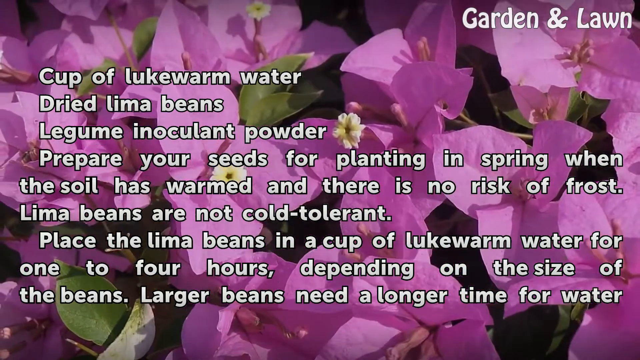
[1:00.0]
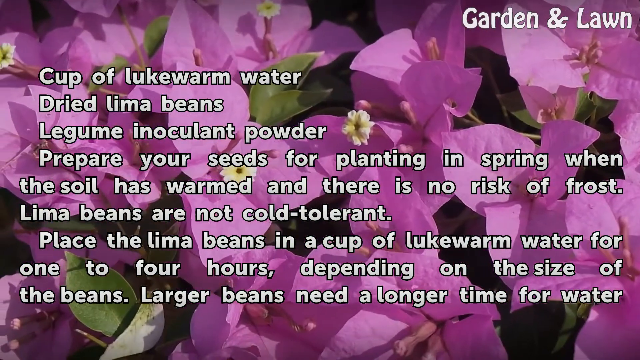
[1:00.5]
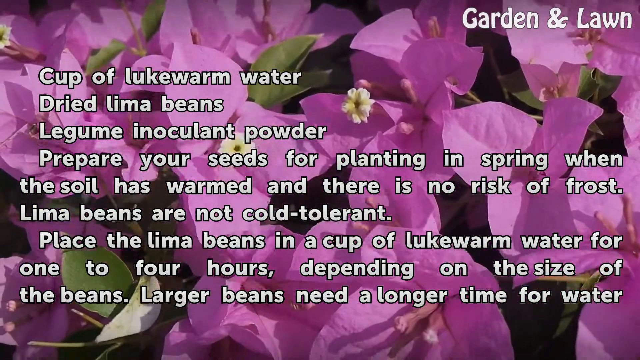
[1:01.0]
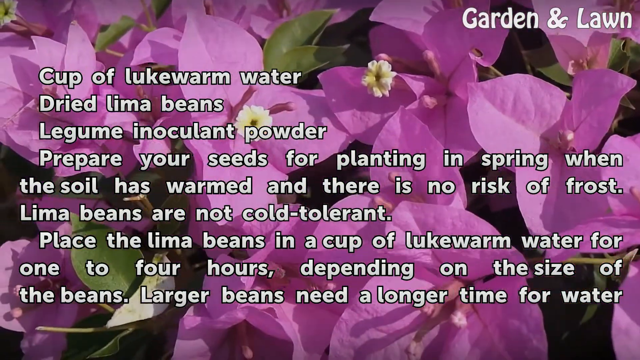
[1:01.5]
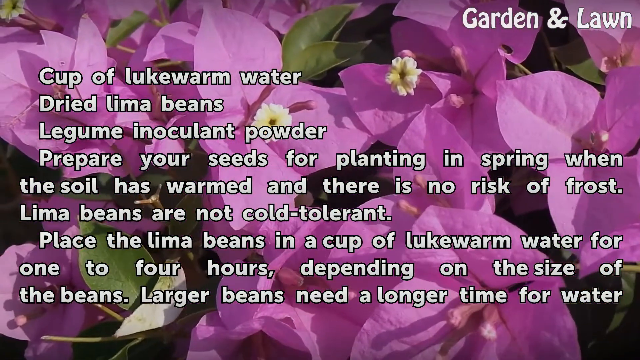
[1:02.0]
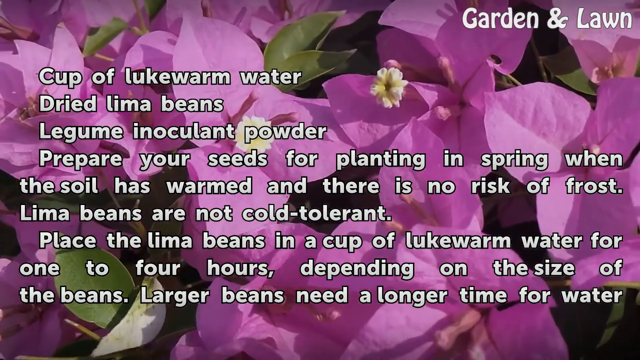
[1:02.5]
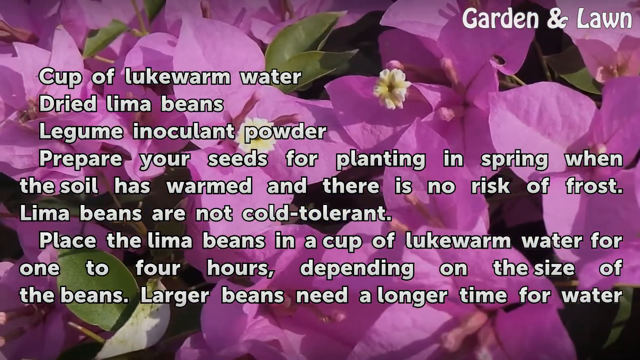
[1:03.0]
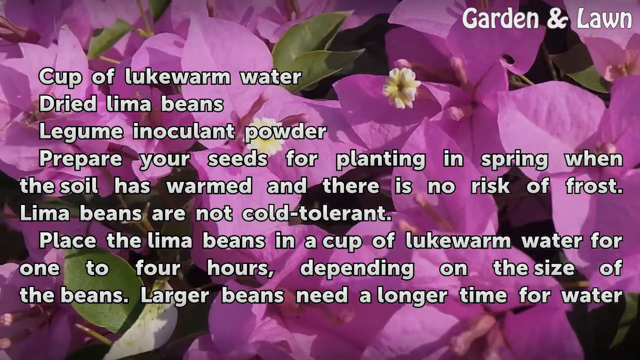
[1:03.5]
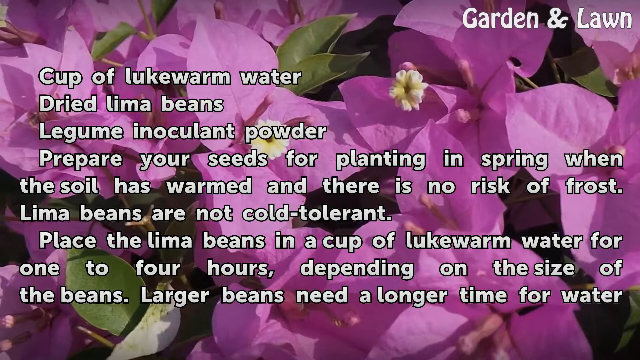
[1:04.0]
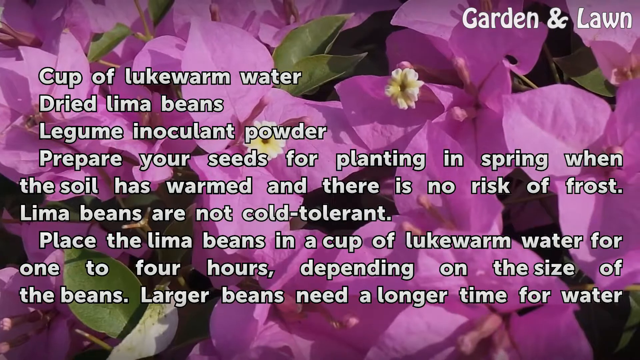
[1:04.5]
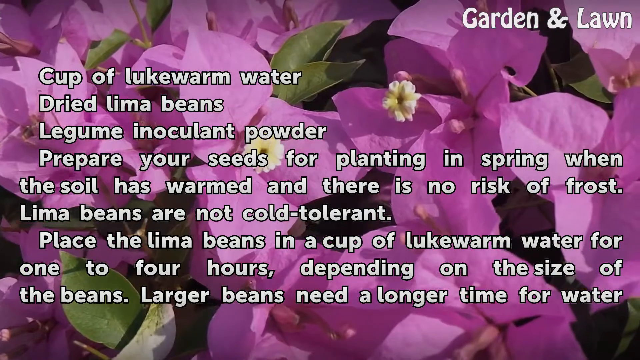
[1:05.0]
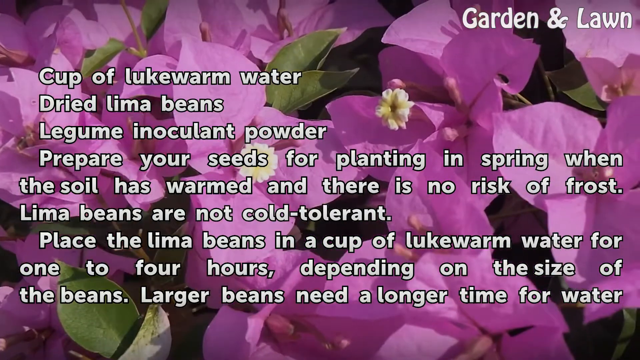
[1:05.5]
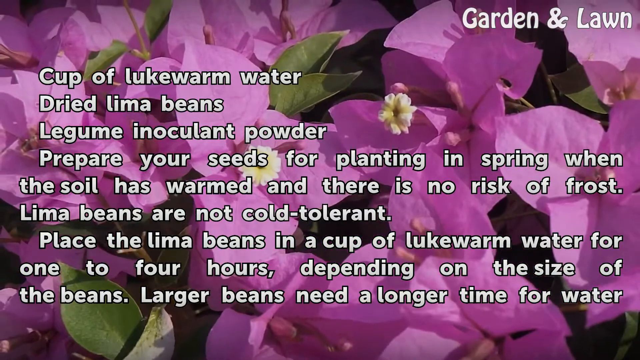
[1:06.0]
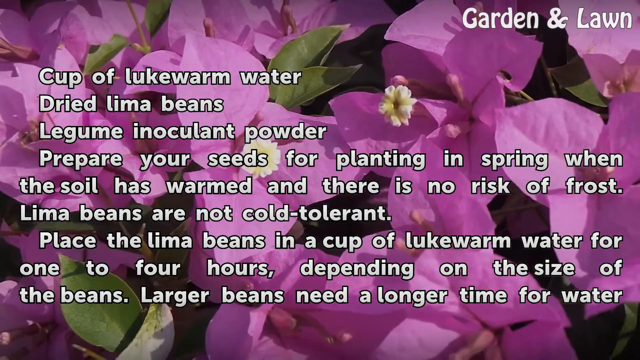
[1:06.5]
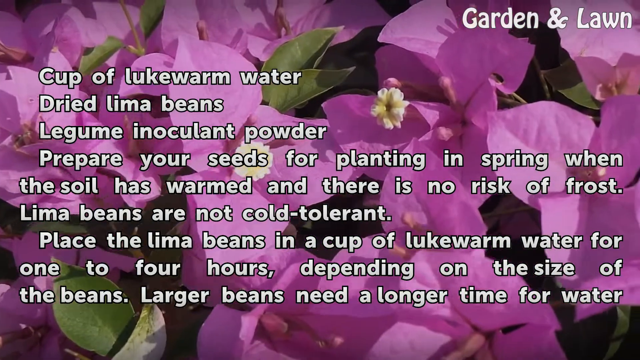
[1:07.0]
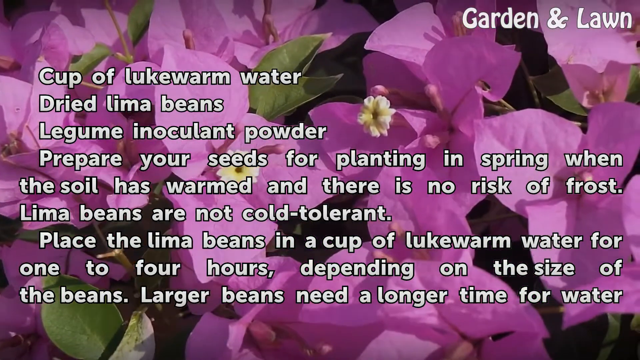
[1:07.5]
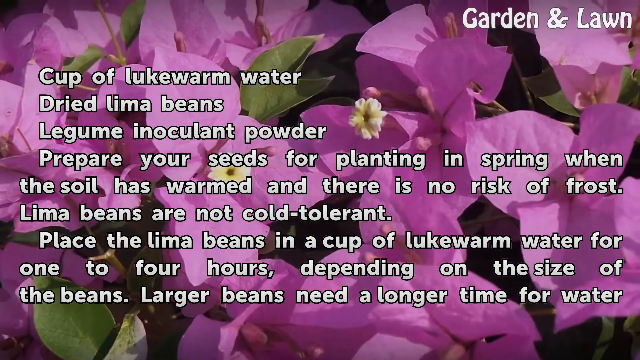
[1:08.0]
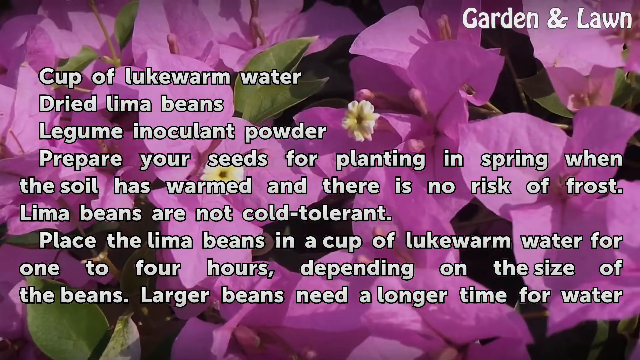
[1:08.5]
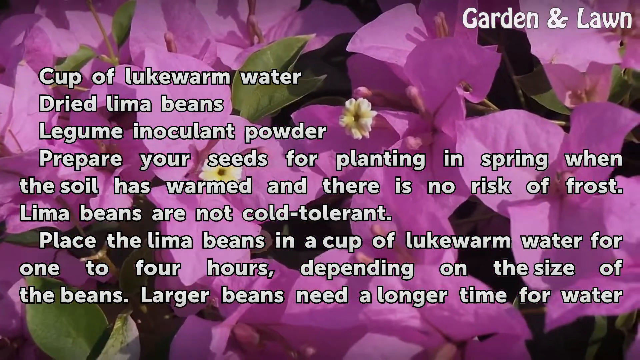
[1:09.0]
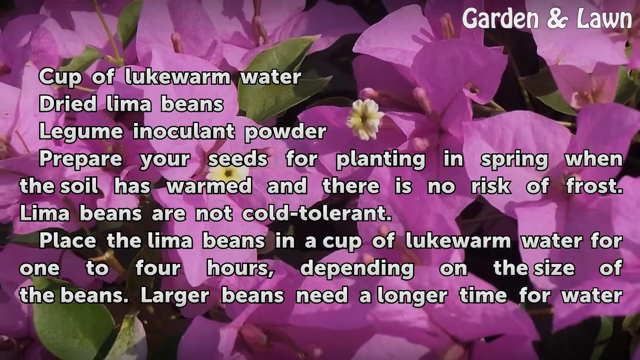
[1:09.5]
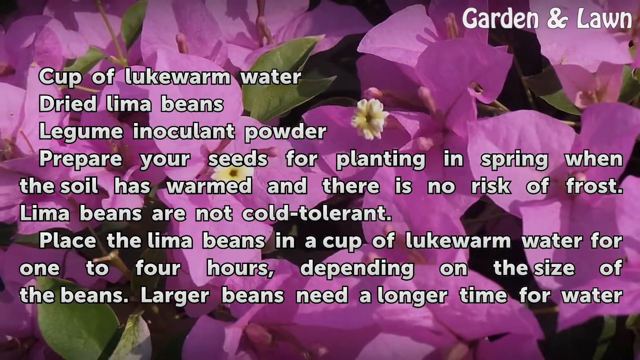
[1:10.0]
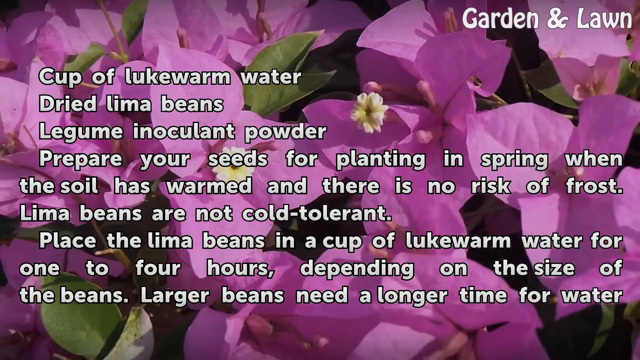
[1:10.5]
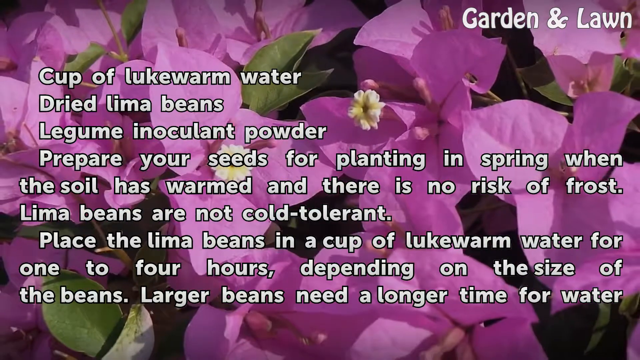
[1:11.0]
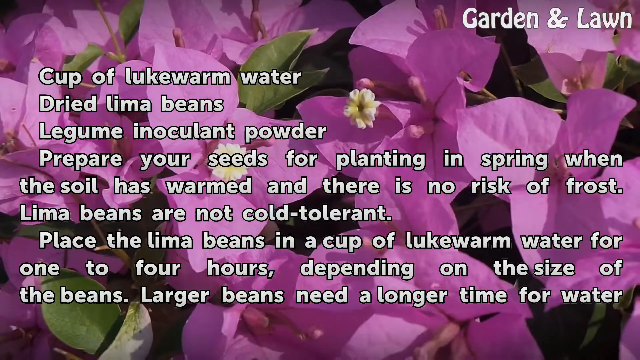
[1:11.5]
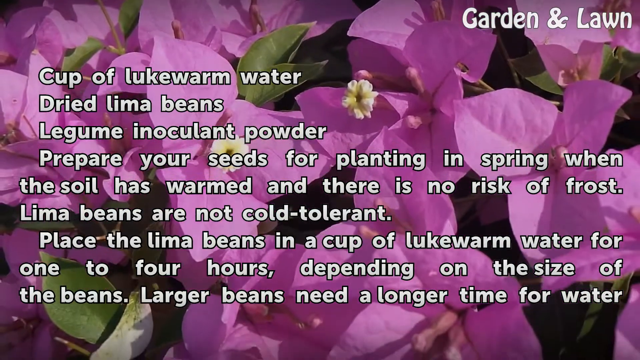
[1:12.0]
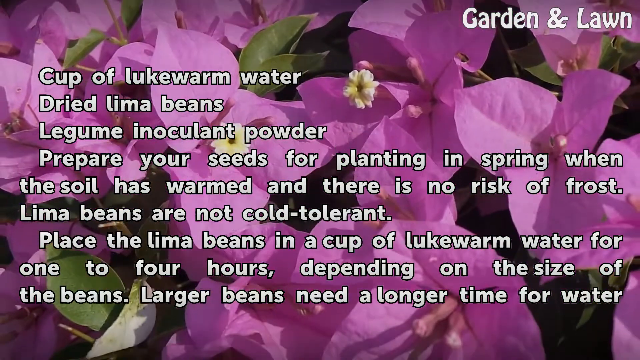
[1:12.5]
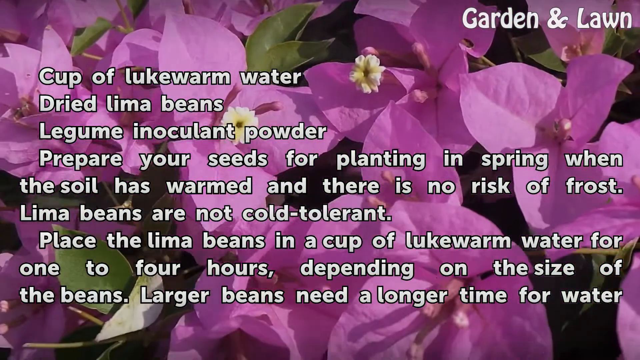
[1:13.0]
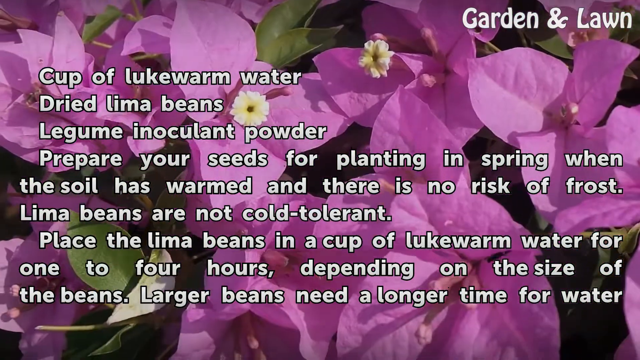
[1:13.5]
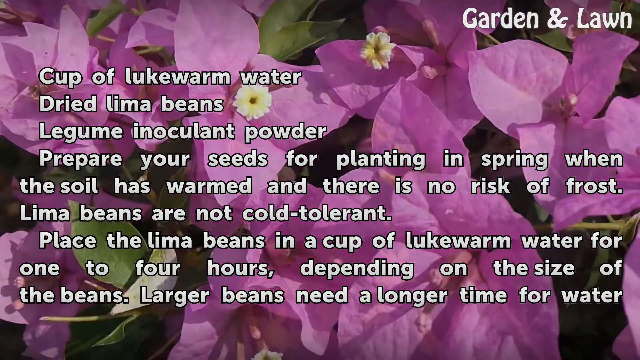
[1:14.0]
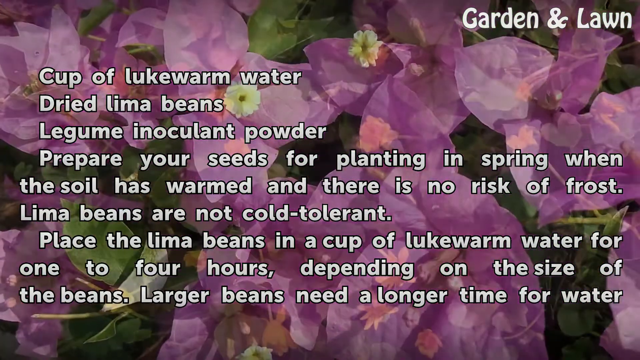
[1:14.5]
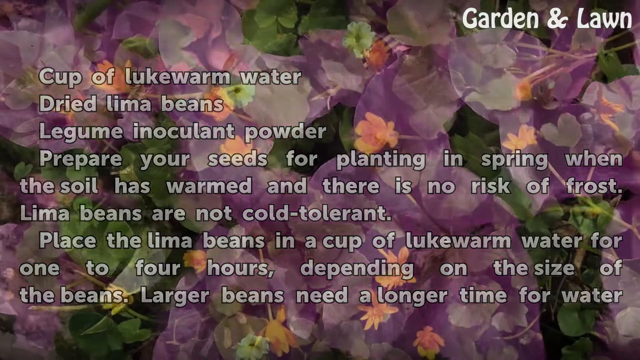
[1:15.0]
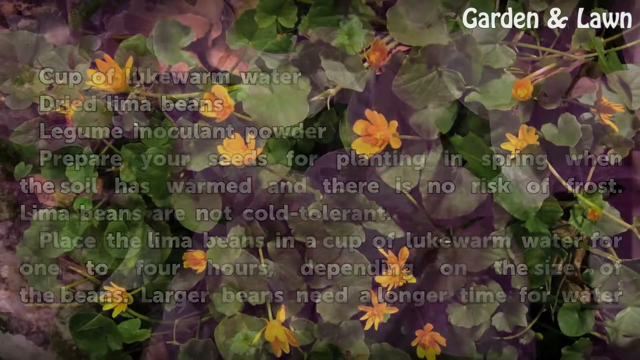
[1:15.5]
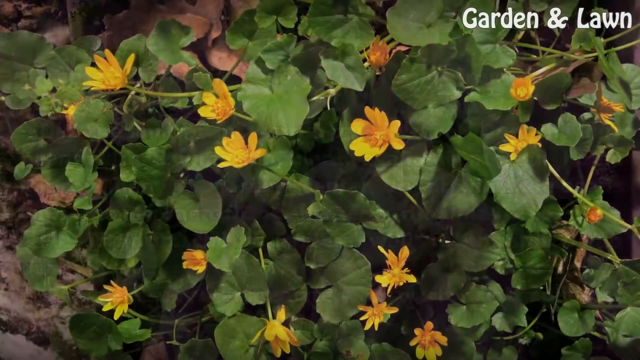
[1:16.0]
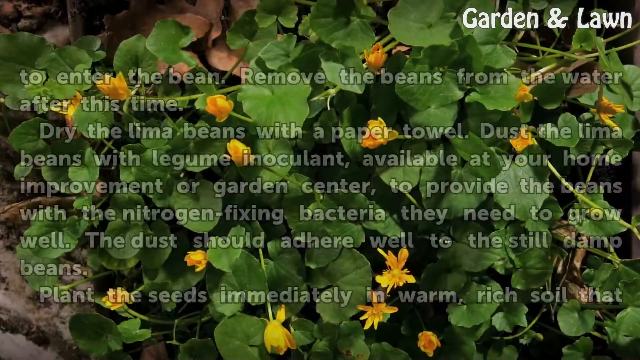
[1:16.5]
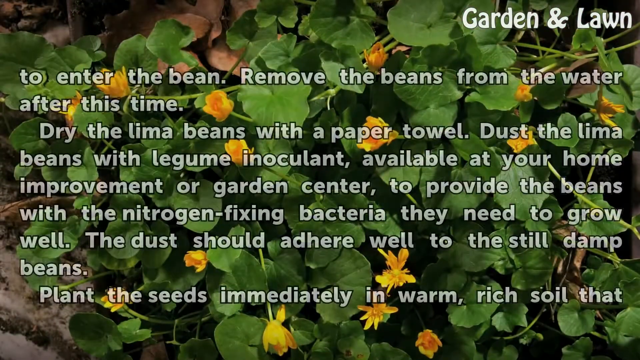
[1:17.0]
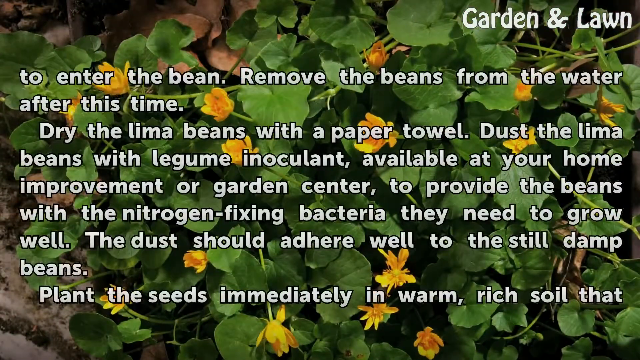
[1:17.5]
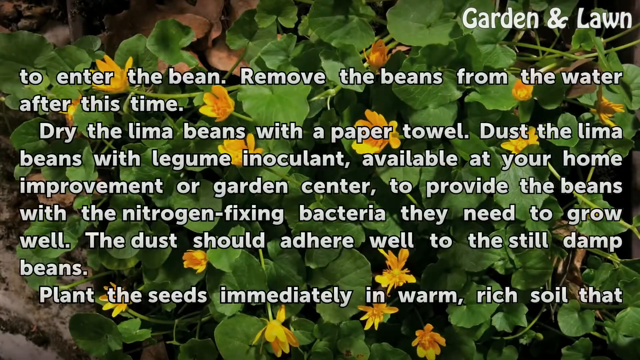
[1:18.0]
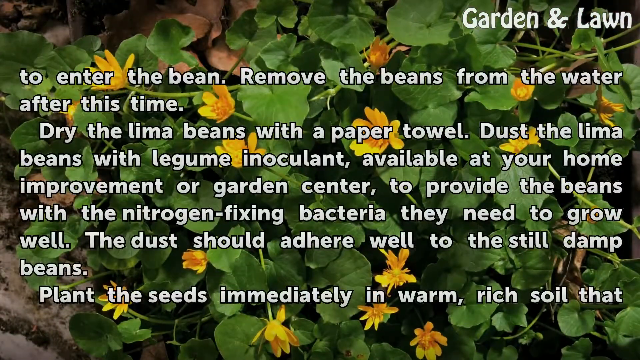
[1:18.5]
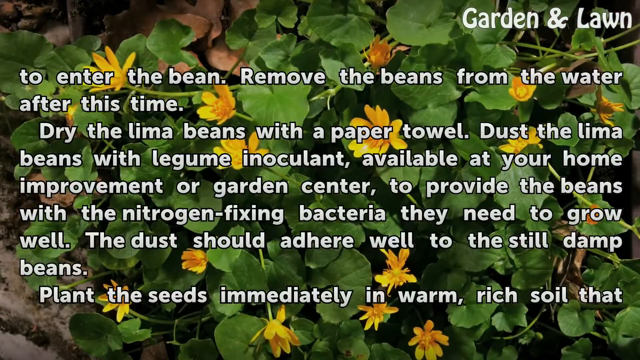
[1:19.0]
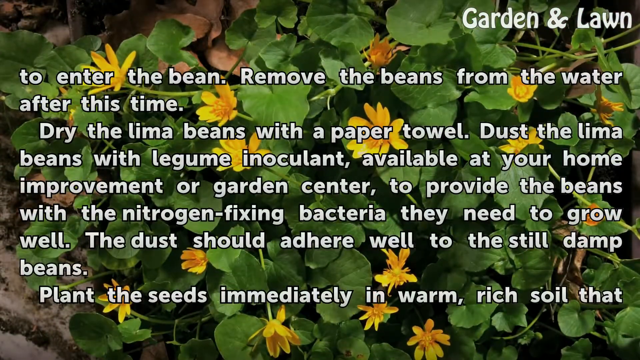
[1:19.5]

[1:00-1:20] Text describing how to make the solution for soaking the dried lima beans remains on the screen. The camera moves across the background scene, where pink or fuchsia petals are still waving in the breeze. Among them are lima beans in pods: green triangular items that look like leaves are pods of lima beans, grown beans in a garden. The text then moves on to a second screen of information.